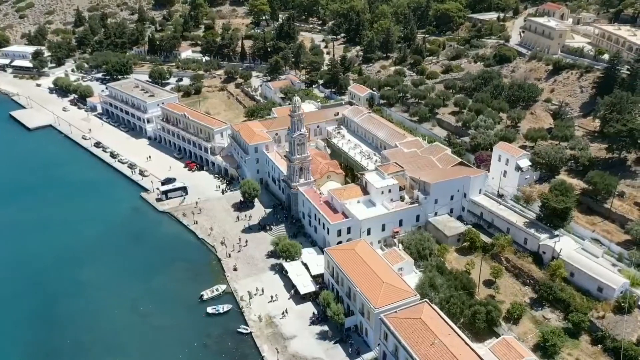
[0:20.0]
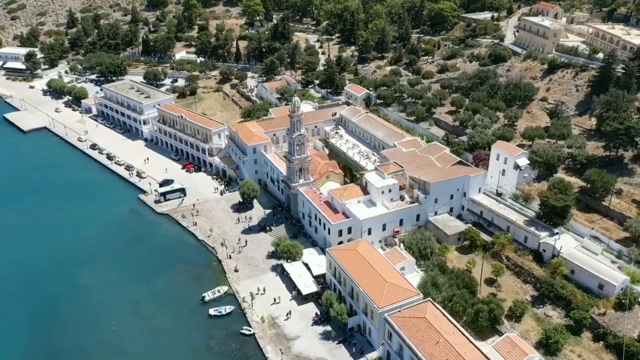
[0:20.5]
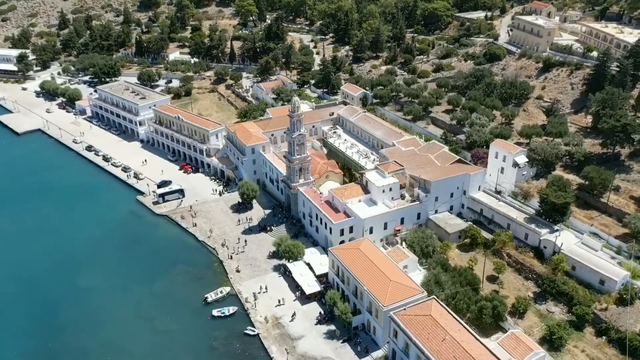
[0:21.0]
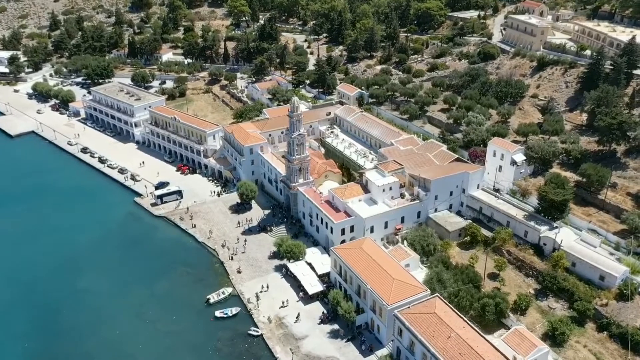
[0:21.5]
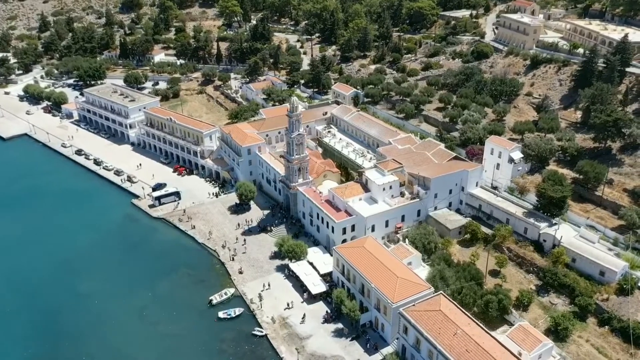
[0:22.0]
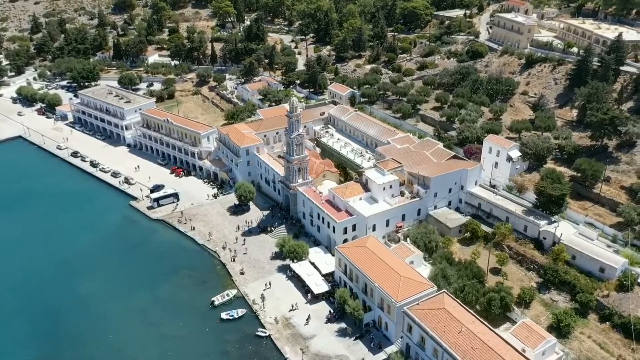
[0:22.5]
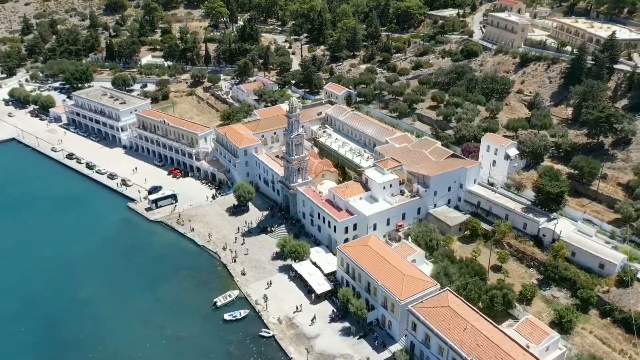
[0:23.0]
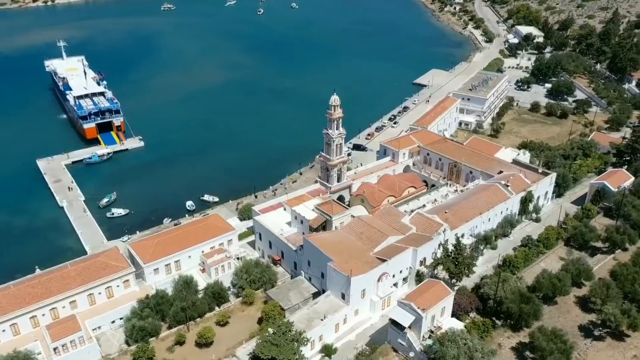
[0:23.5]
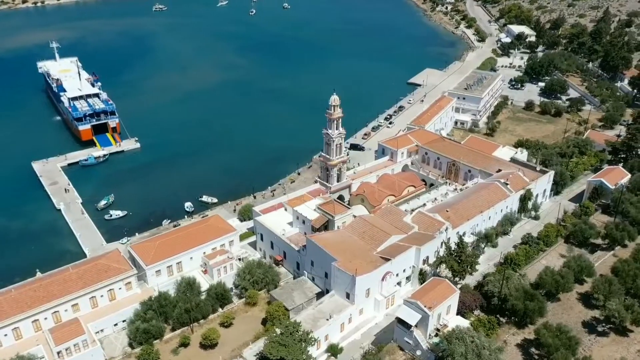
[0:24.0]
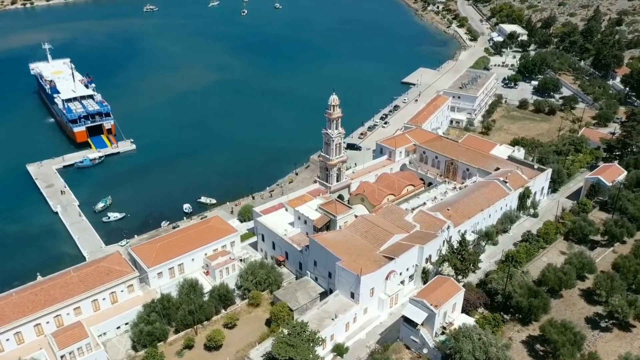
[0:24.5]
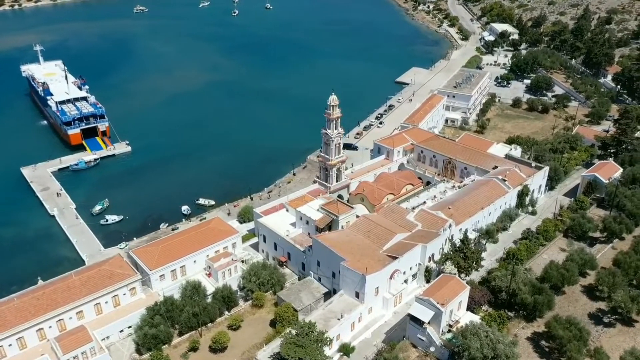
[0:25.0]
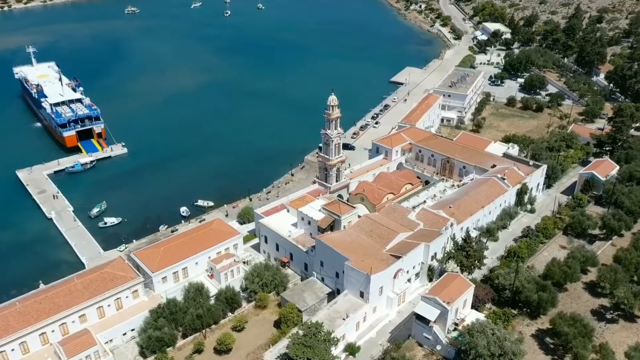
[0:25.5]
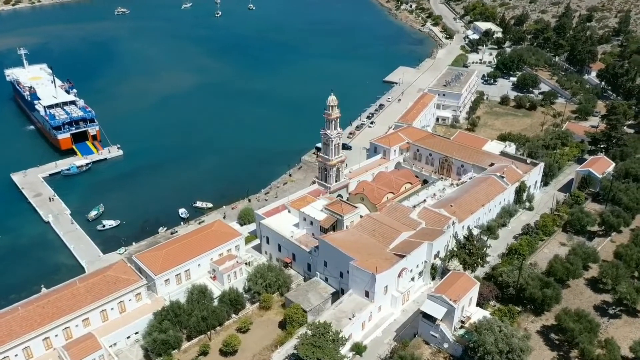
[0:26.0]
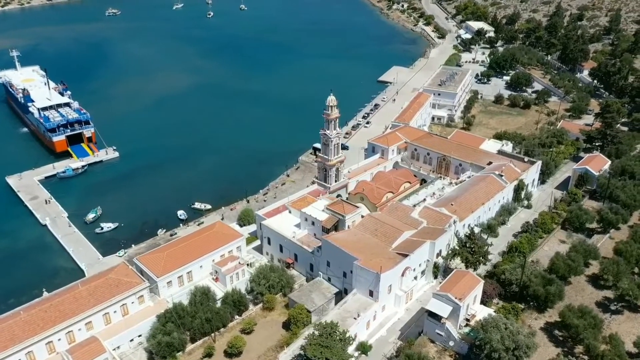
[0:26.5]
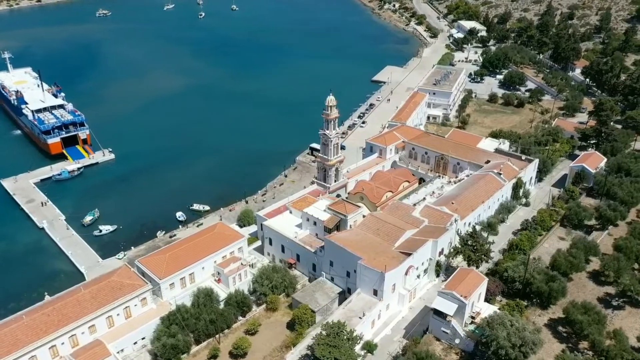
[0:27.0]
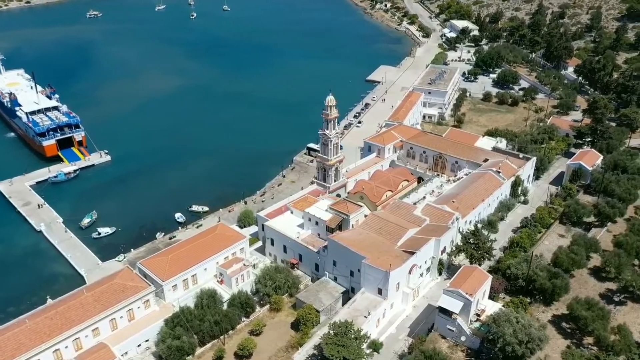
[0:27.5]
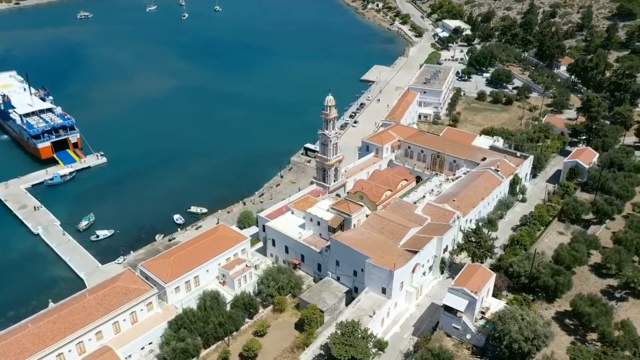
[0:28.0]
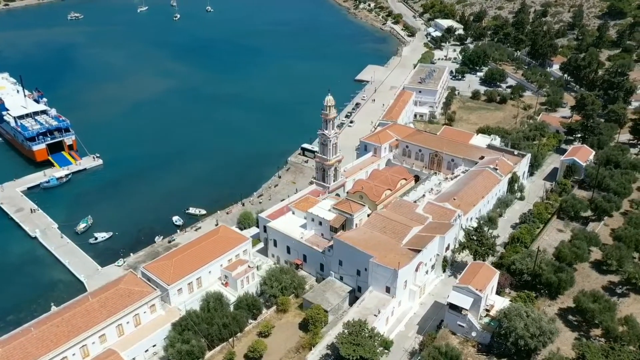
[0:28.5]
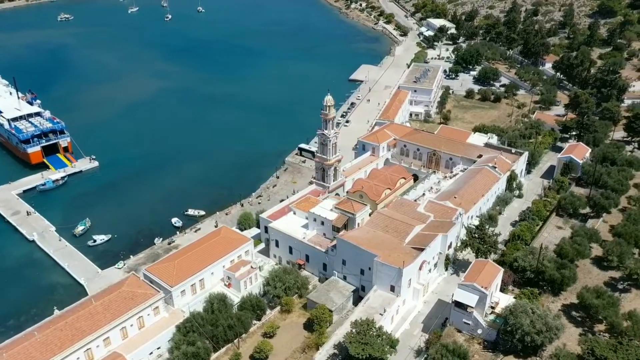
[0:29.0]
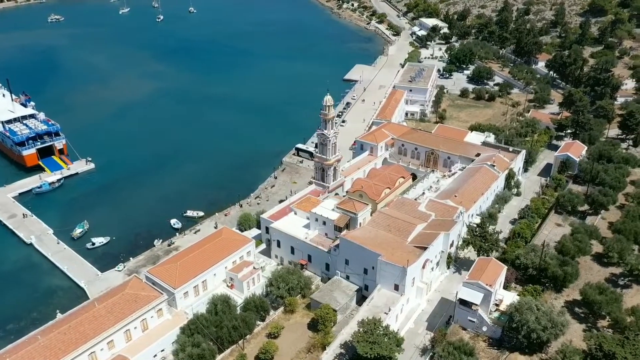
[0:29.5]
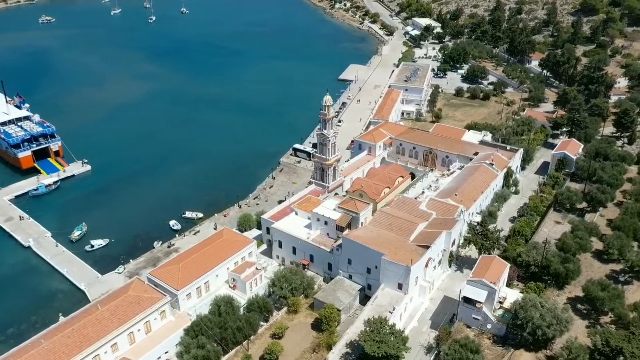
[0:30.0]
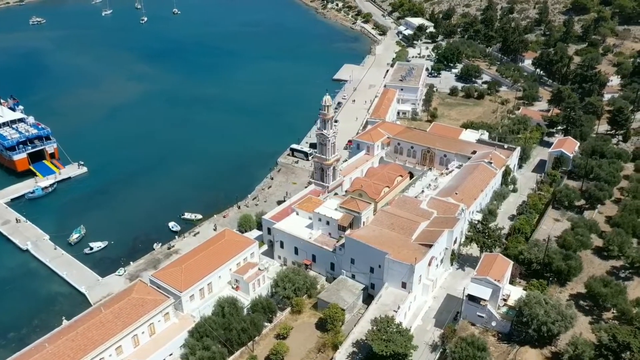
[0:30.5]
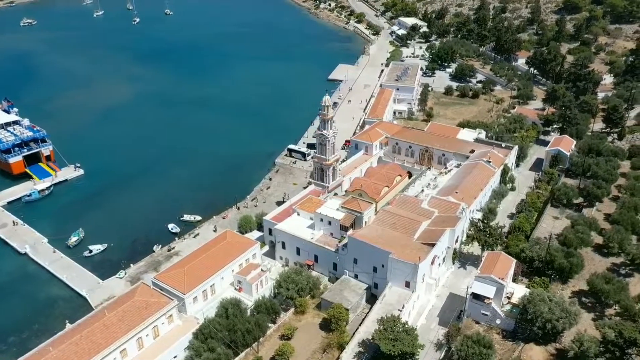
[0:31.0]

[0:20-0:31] The aerial drone footage continues as the operator tilts the drone down and back up, showing different areas. A large, square white building has a monument at its front, with concrete steps going up to the small, triangle-shaped monument, which is very tall but skinny. The building is shaped like a square, with a courtyard in the middle. On the left and right sides are also tall white buildings that look to be like a hotel or a university. There are five white buildings in all, each with a tan roof. Trees are sprinkled all around the buildings, and a concrete walkway runs in front of them with people walking on it. In front of it is a body of water with boats parked in it.